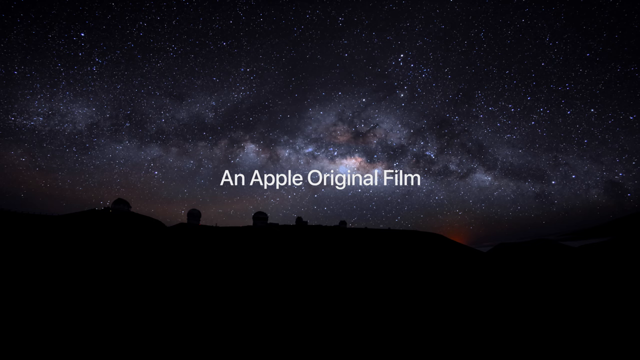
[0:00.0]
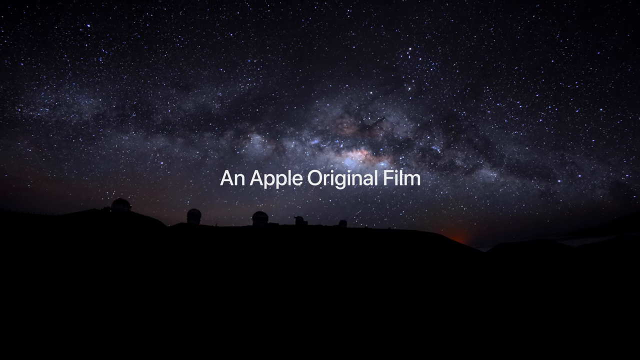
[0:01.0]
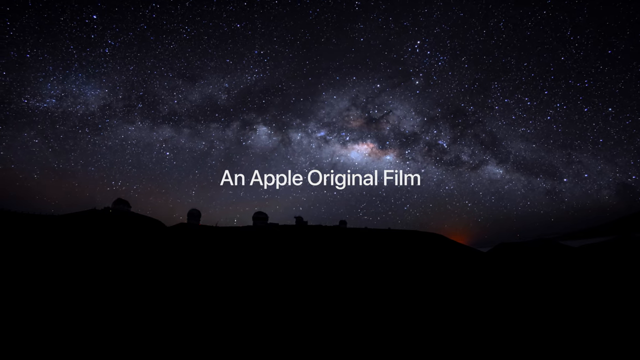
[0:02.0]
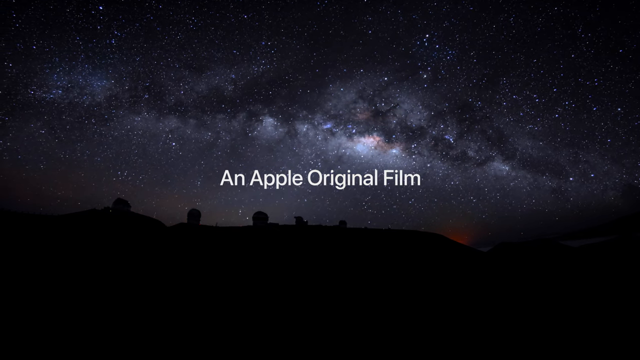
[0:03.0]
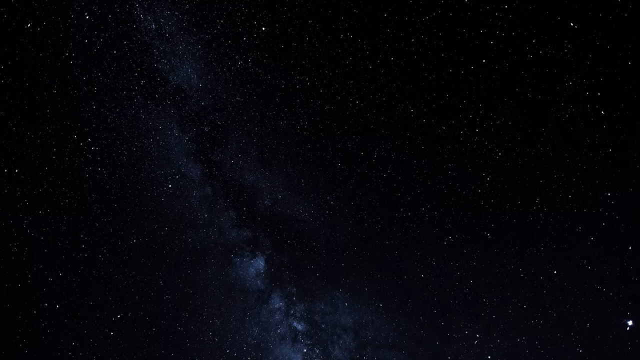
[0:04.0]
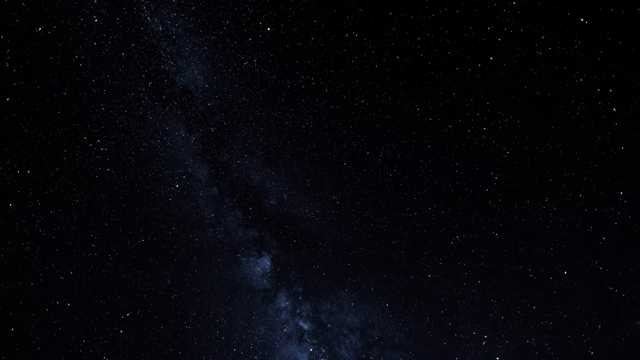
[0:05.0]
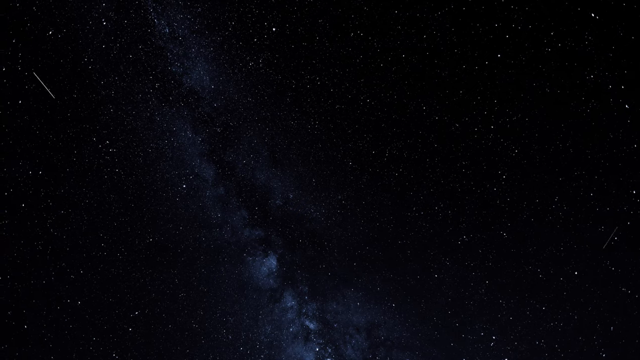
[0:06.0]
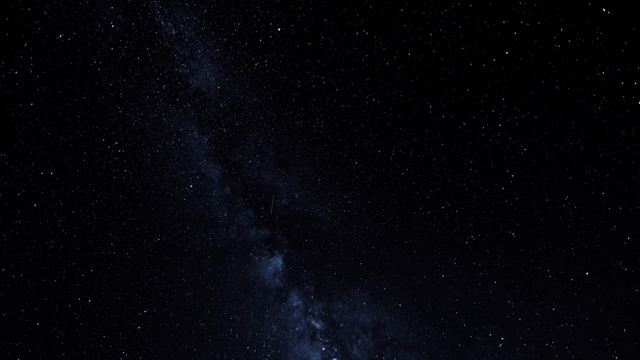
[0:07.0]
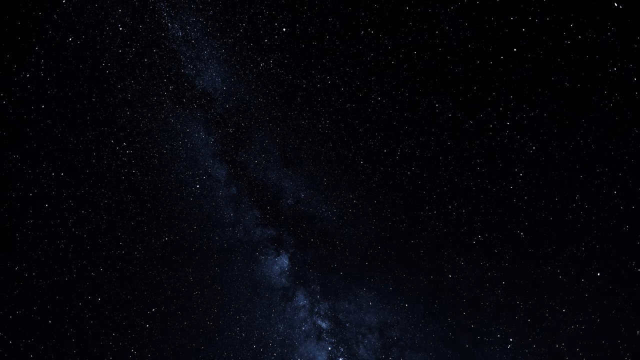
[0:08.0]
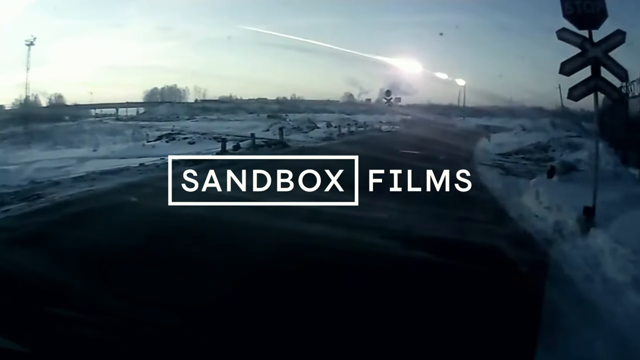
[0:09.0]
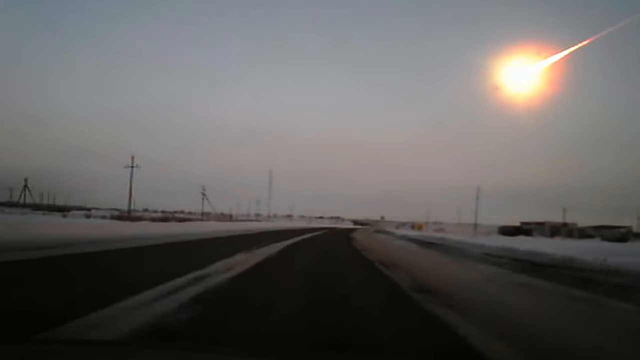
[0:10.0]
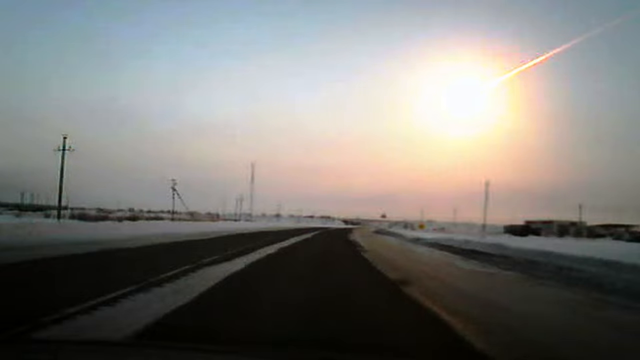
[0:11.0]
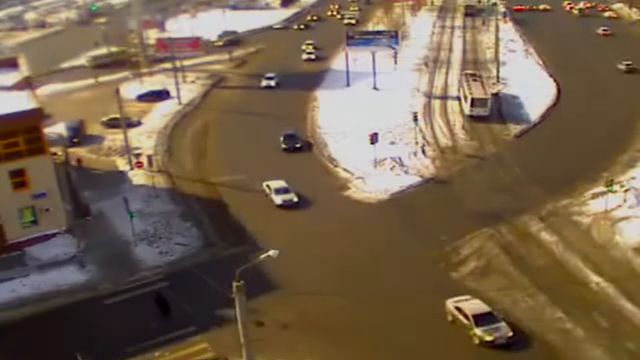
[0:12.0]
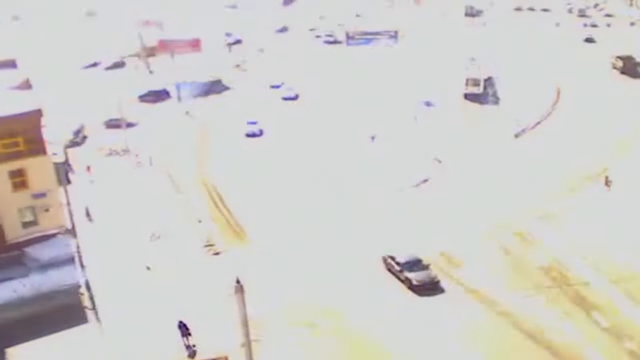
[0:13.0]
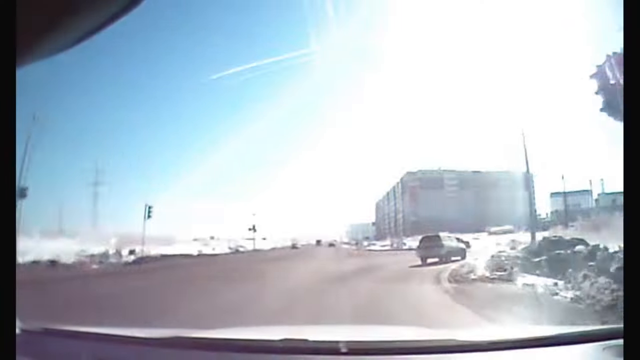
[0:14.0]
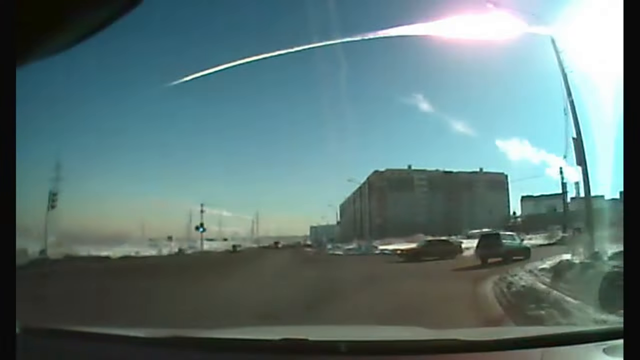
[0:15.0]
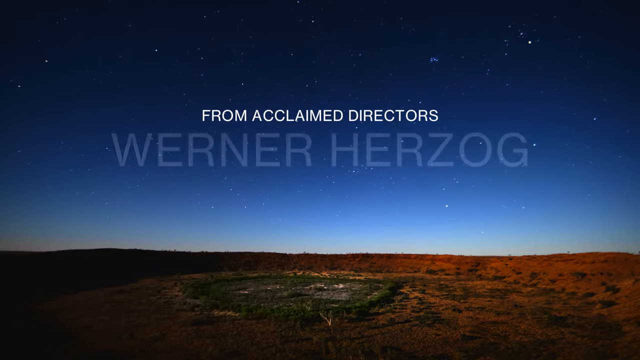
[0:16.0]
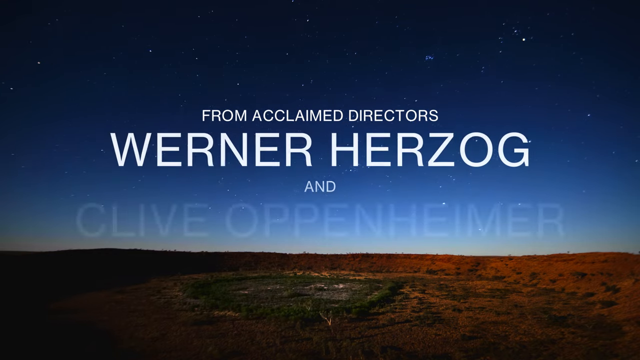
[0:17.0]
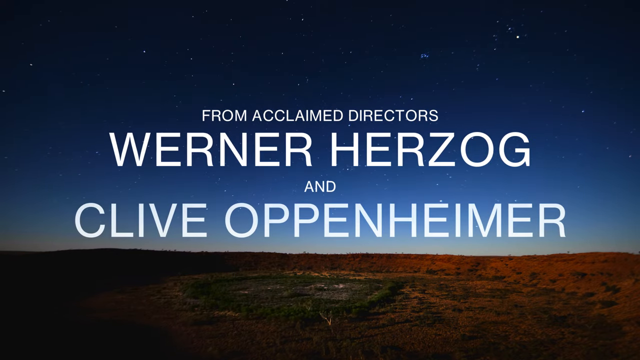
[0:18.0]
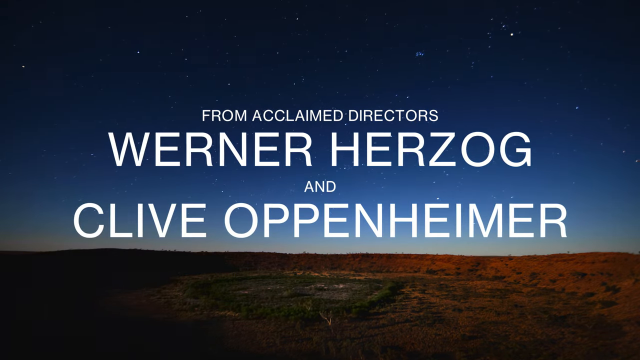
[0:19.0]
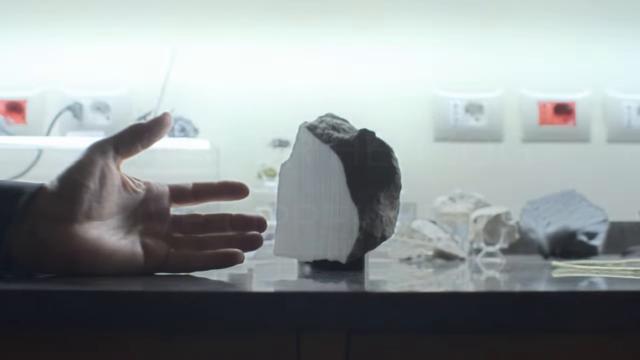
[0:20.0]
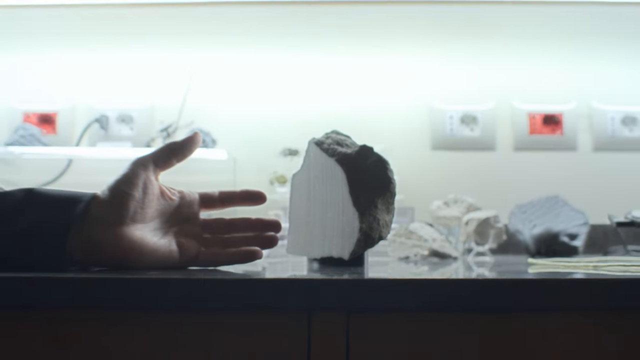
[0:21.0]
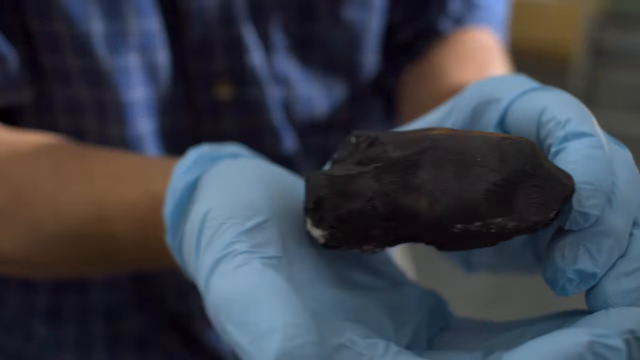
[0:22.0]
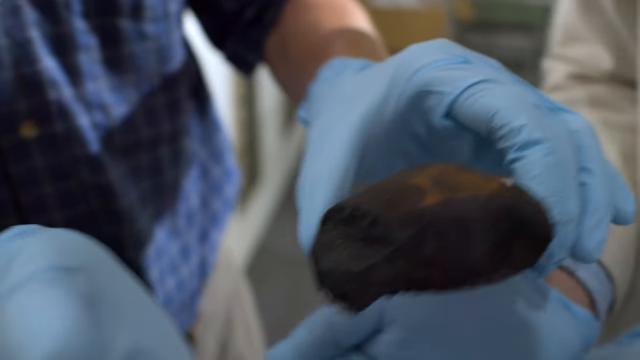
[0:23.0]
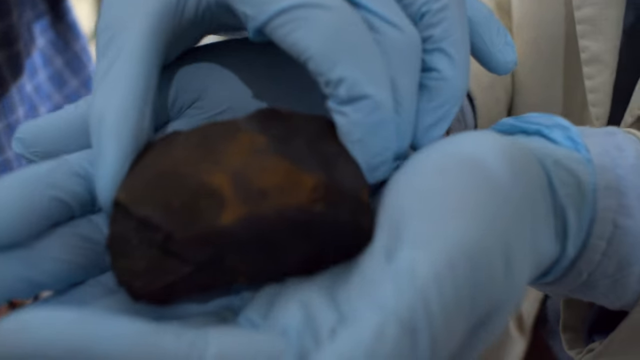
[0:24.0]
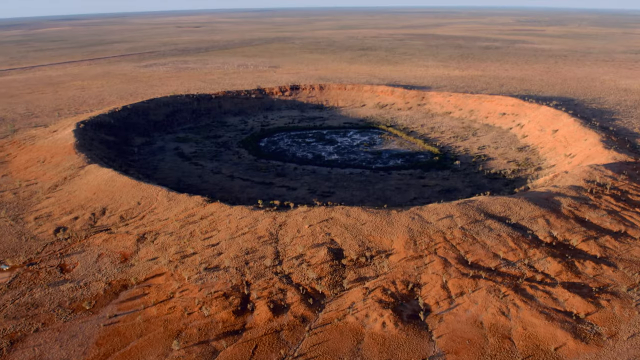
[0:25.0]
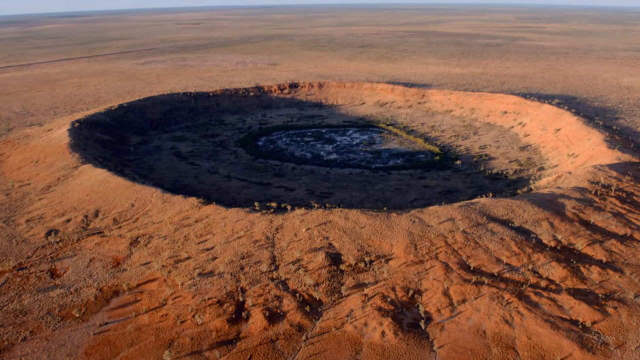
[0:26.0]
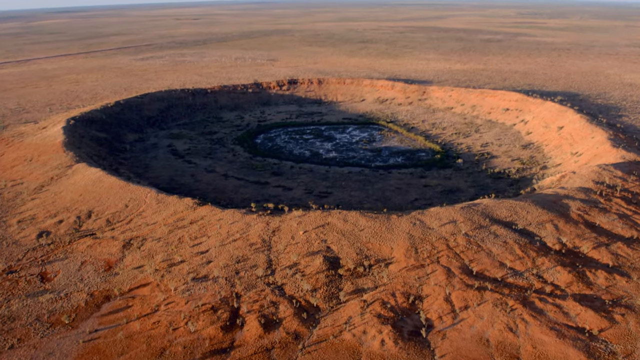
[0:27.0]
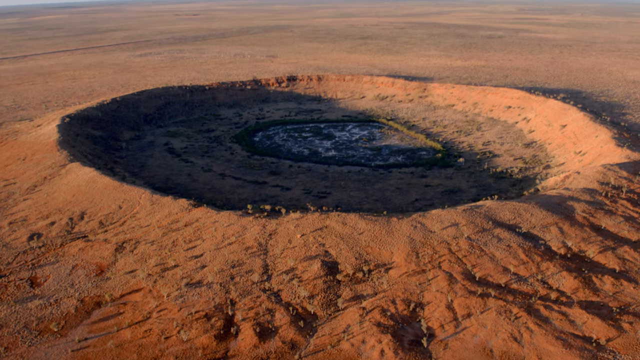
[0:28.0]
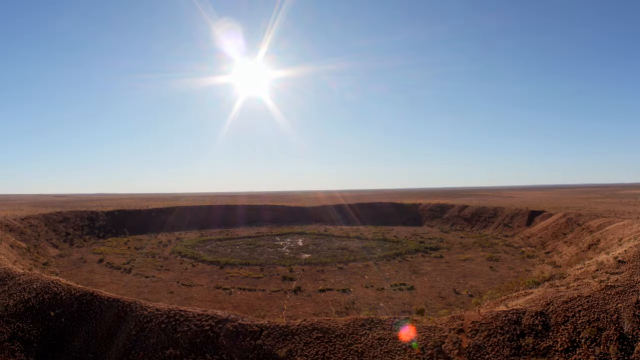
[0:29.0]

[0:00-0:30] Something from the sky comes down to hit the ground, and cars travel along the ground. Text reads "from acclaimed directors Werner Herzog and Clive Oppenheimer." In the first scene a hand stretches out toward what looks like a storm. A place is shown where a meteorite has struck from the sky, leaving a large wall, a crater, in the desert. People try to see what happened there, and they are puzzled.